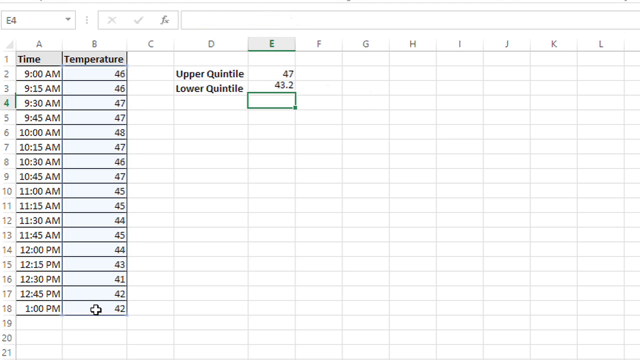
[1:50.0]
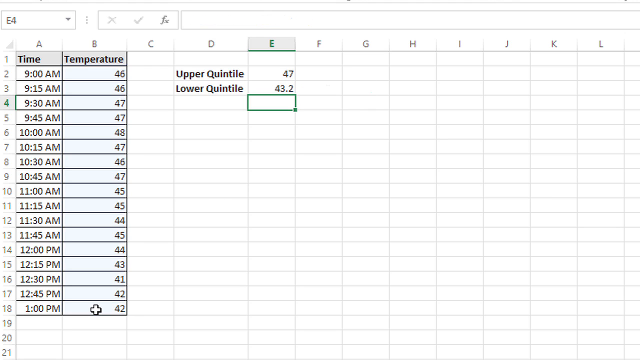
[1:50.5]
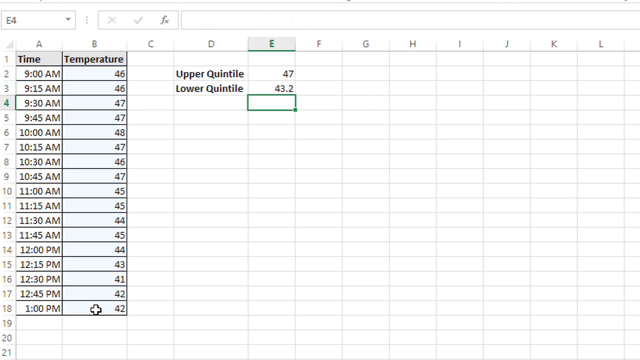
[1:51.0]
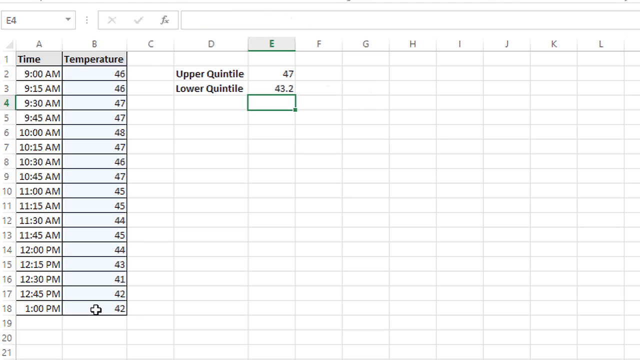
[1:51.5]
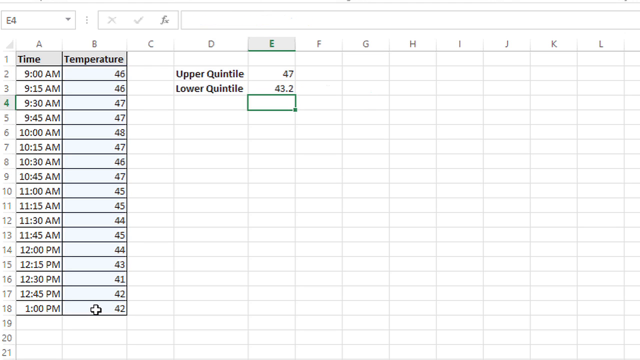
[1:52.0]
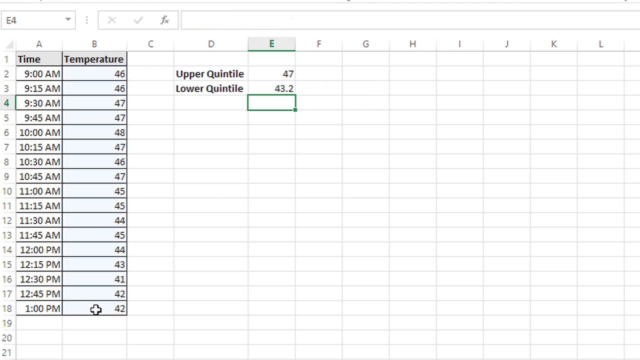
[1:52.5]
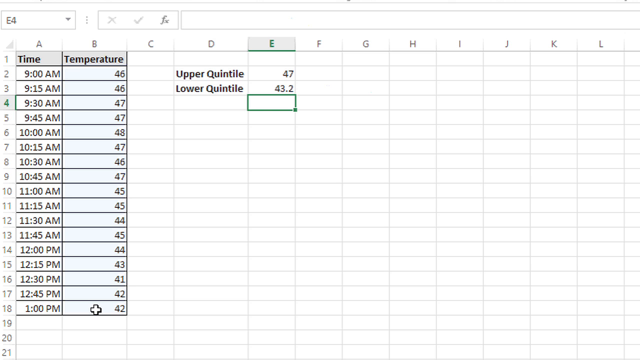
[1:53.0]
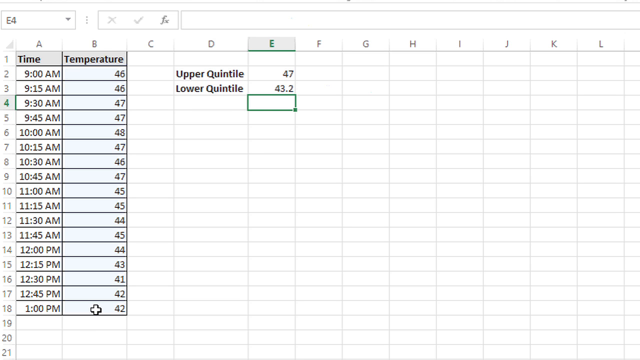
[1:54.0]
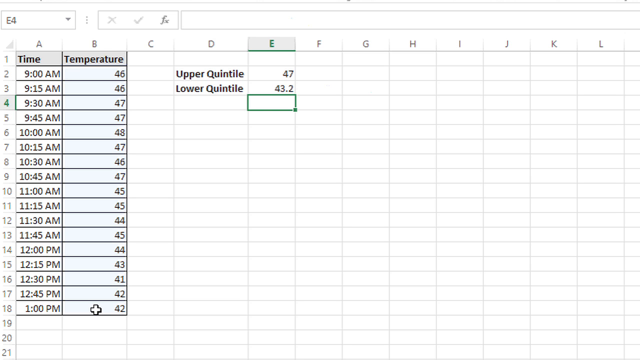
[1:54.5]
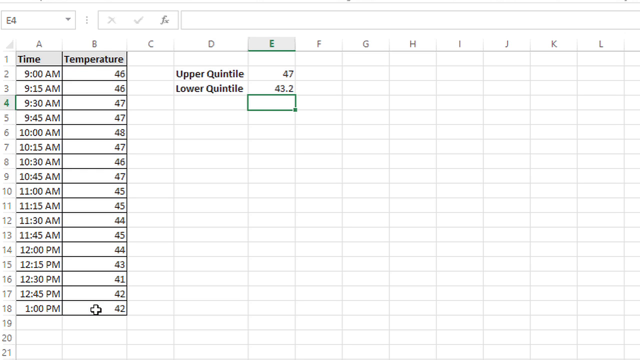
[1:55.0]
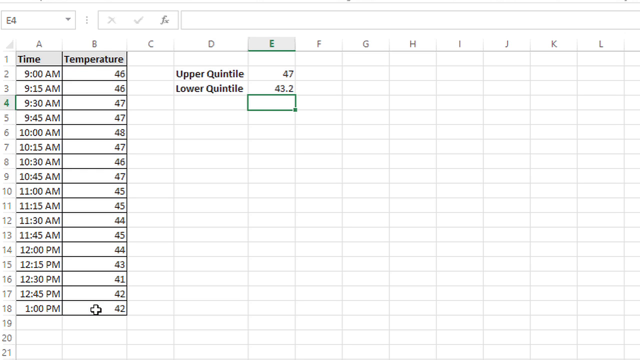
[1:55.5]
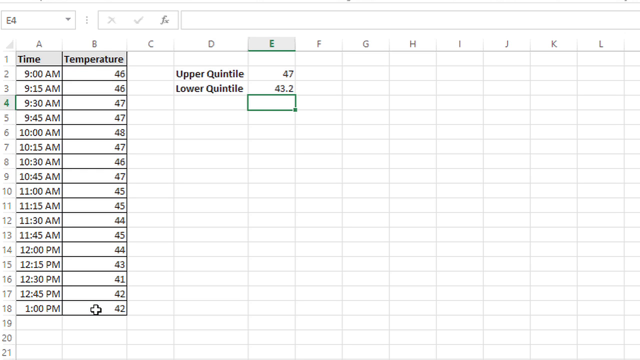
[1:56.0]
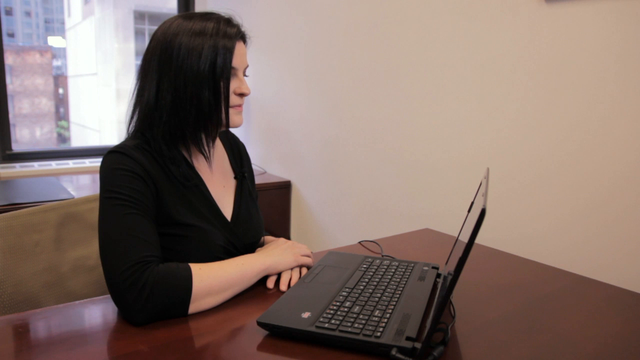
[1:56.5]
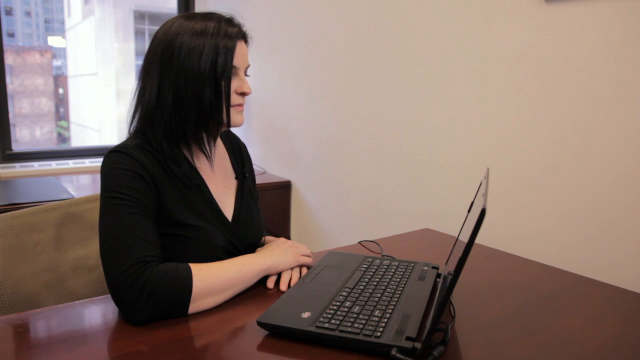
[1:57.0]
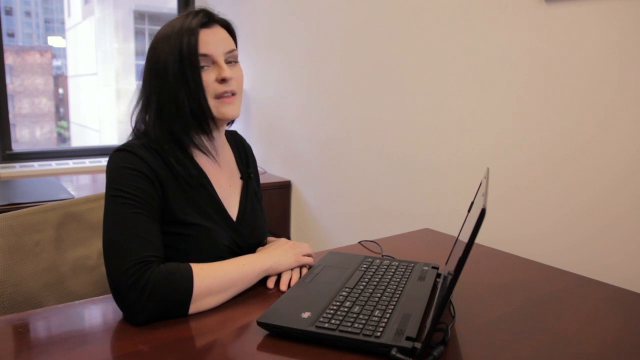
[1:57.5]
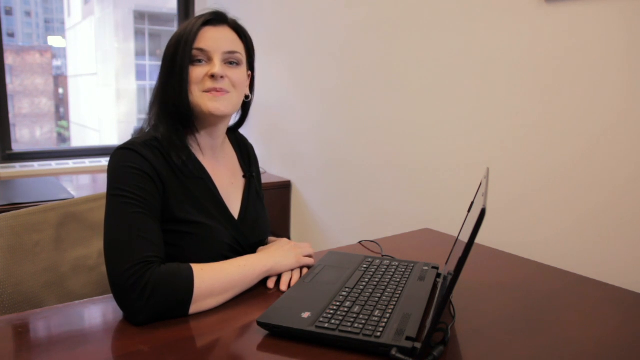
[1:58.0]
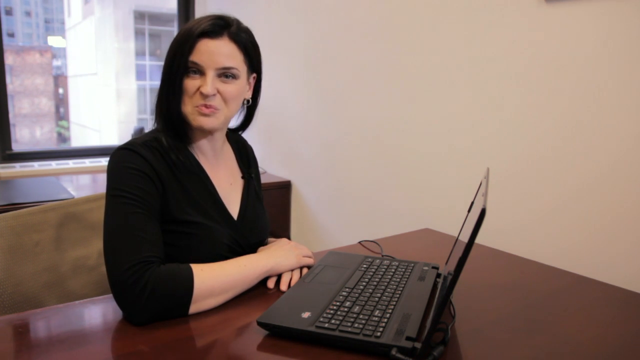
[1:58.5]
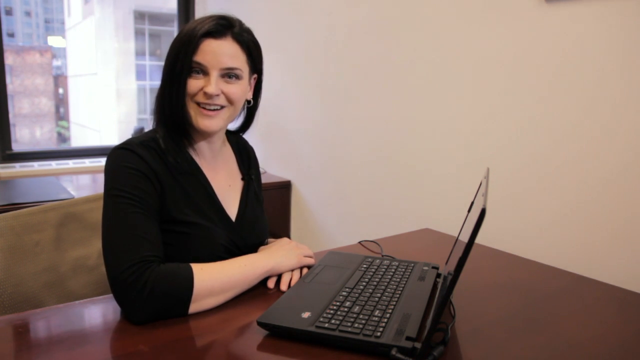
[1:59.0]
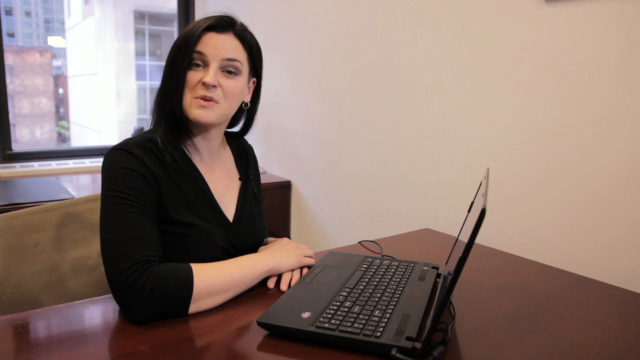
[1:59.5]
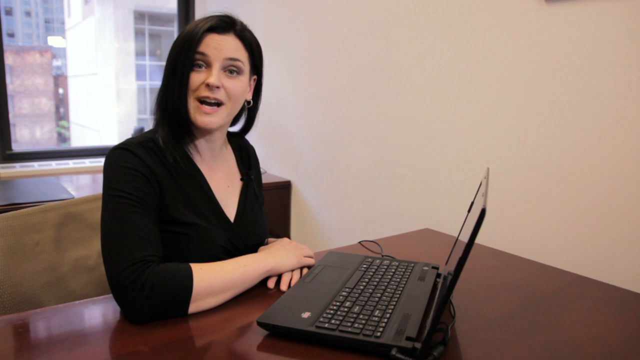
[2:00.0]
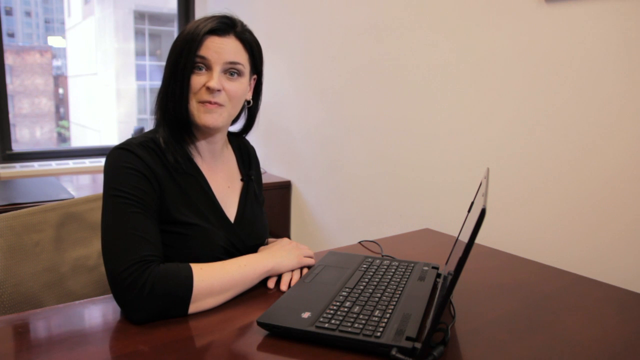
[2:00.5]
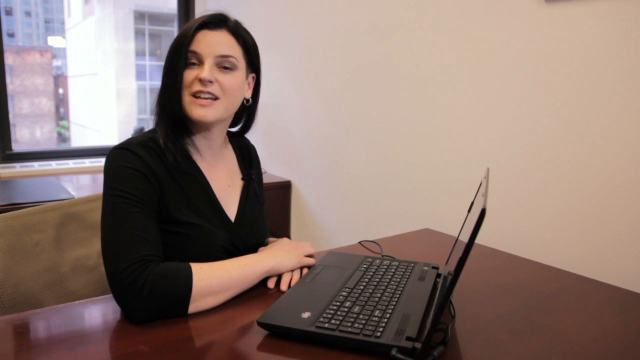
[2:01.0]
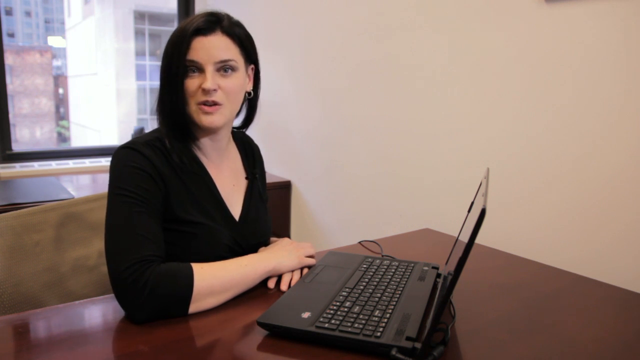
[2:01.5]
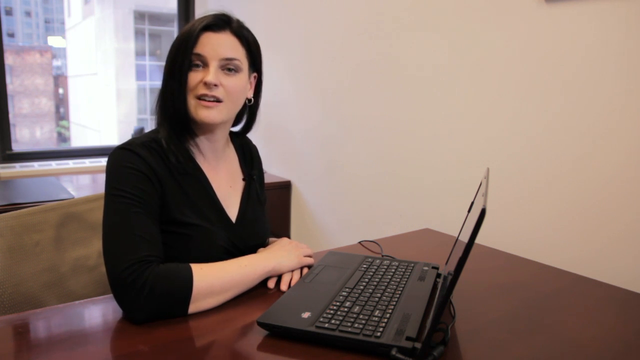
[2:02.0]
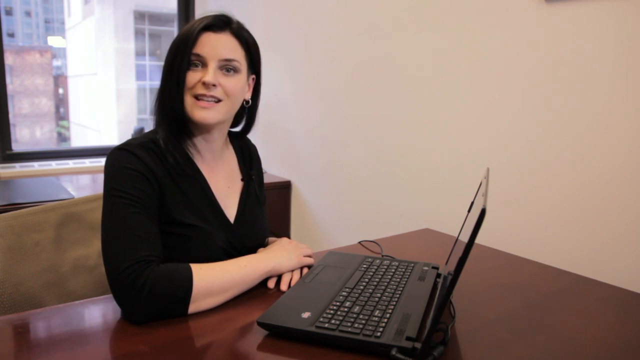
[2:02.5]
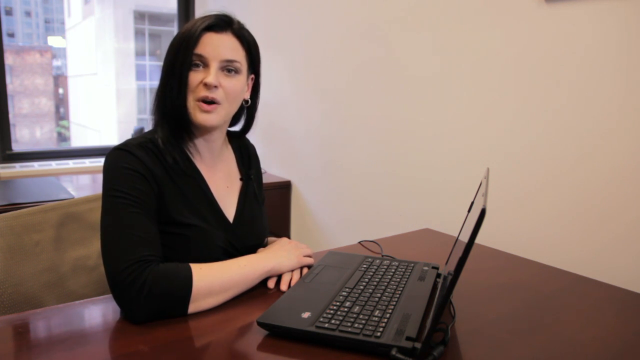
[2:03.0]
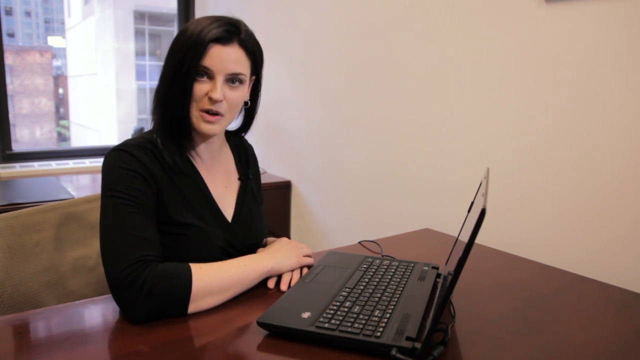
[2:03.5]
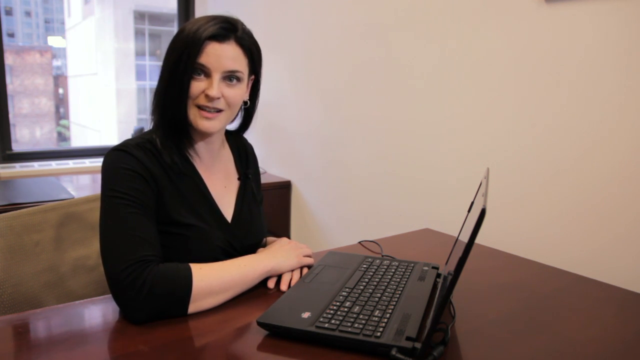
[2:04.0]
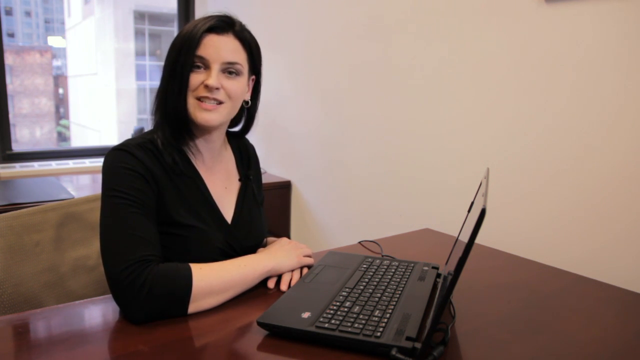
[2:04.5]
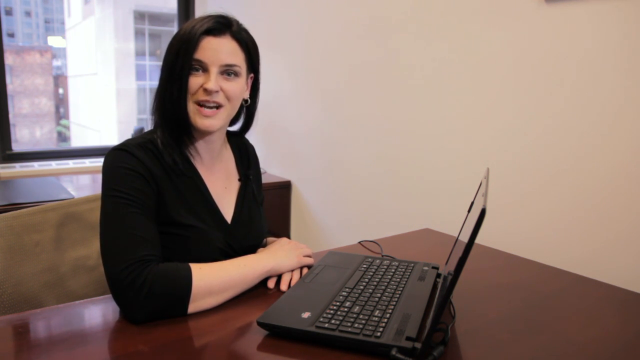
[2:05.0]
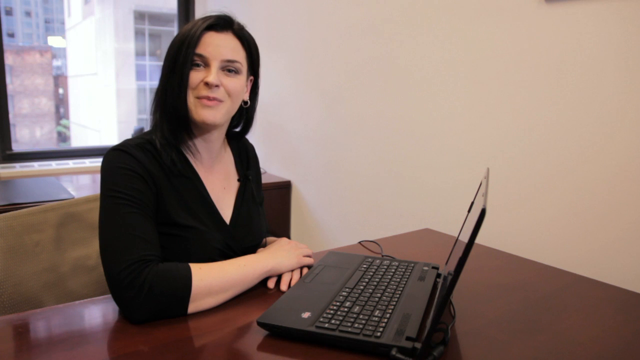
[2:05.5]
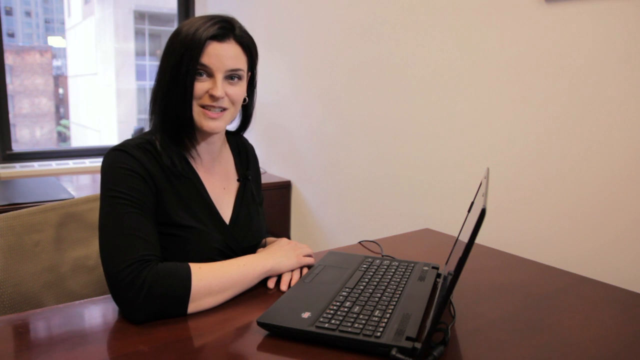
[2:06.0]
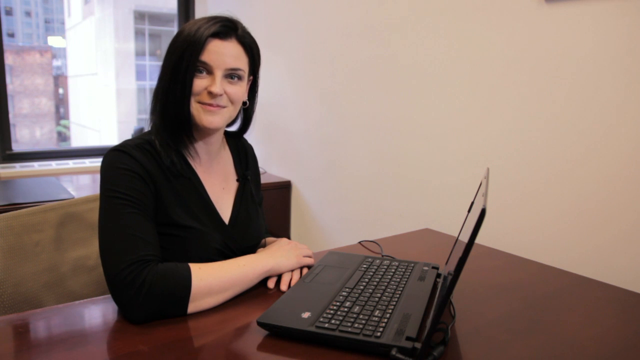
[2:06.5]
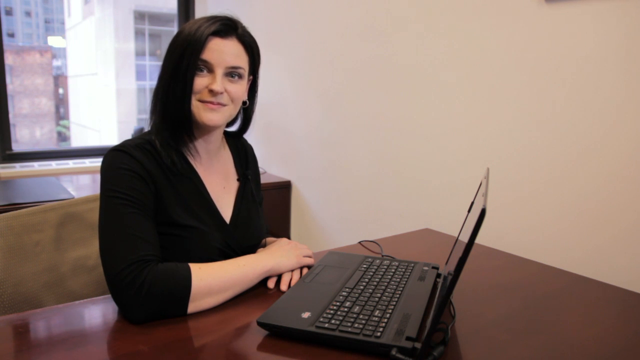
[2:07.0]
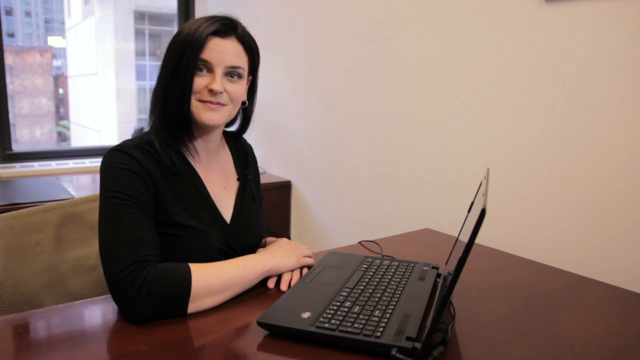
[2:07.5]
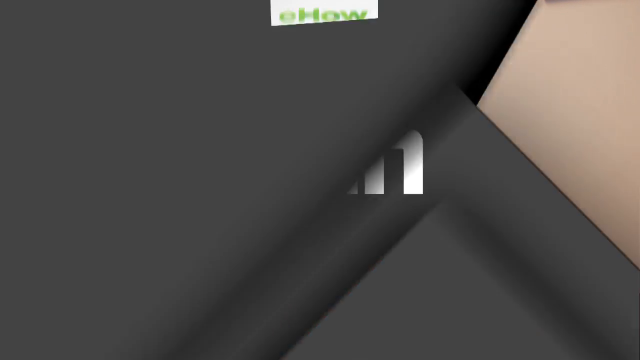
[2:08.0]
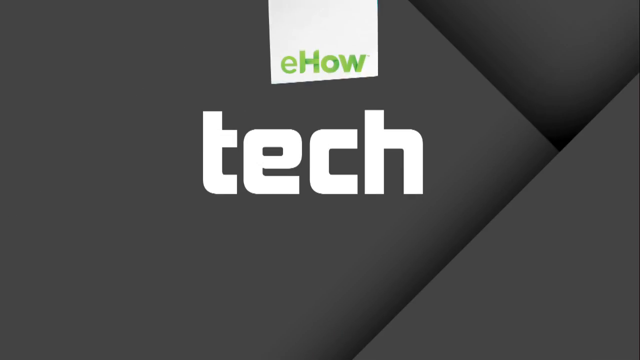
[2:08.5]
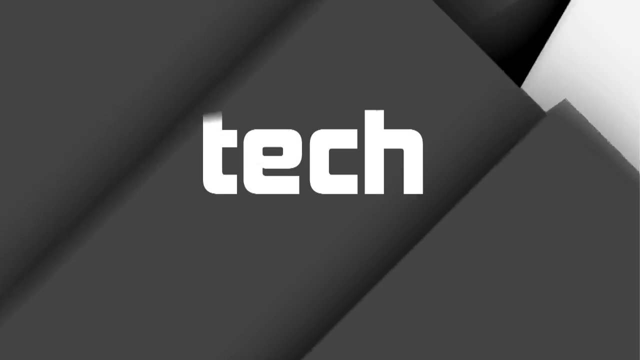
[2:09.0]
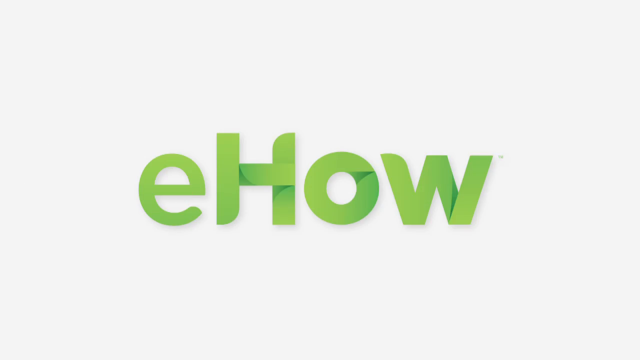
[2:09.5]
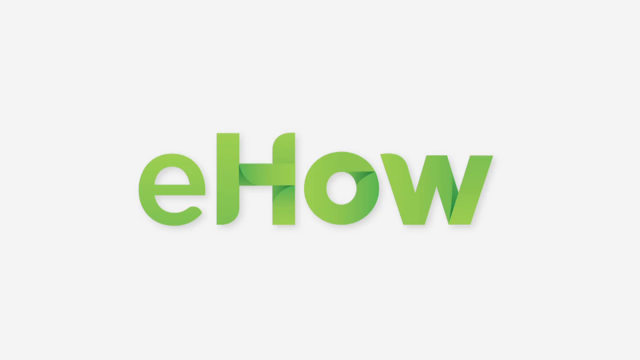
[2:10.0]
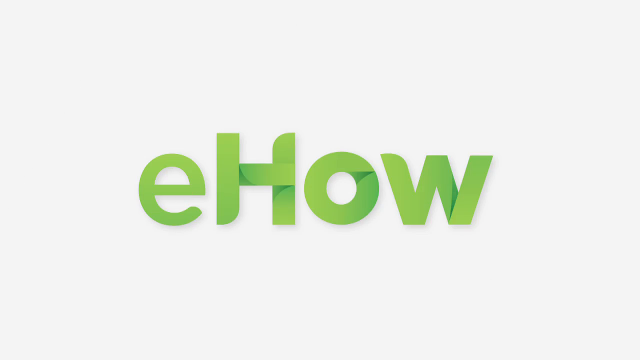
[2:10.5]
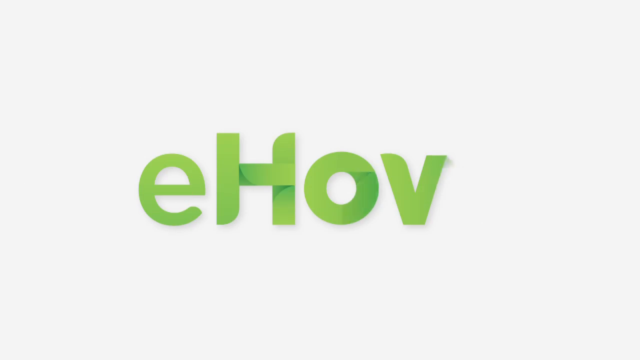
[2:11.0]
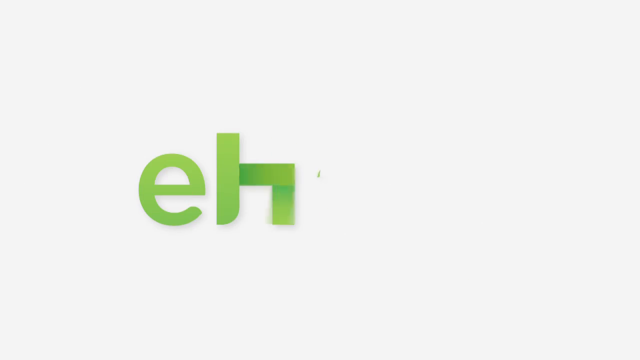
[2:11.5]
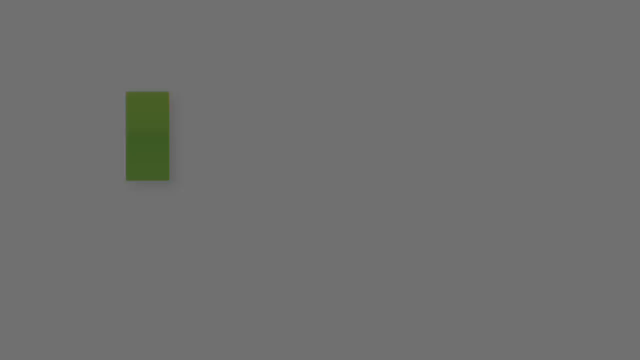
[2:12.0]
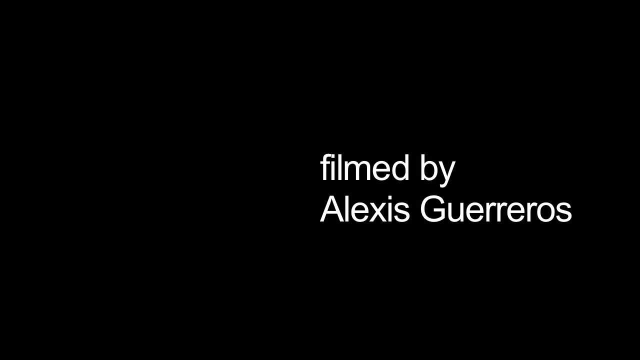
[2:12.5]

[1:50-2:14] A screen recording shows Microsoft Excel open with two columns of information on the left. Column A is labeled "time" in row 1, with various times in the rows below; column B is labeled "temperature" in row 1, with rows 2 to 18 filled with double-digit temperatures. Column D reads "upper quintile" in row 2 and "lower quintile" in row 3, and column E reads 47 in row 2 and 43.2 in row 3. The cell in column E, row 4, is highlighted in green on its edges. The video cuts to a woman in a black V-neck collar blouse looking down at a black laptop set on a brown wooden desk in a white-painted office. She slowly turns her head toward the camera and starts talking.